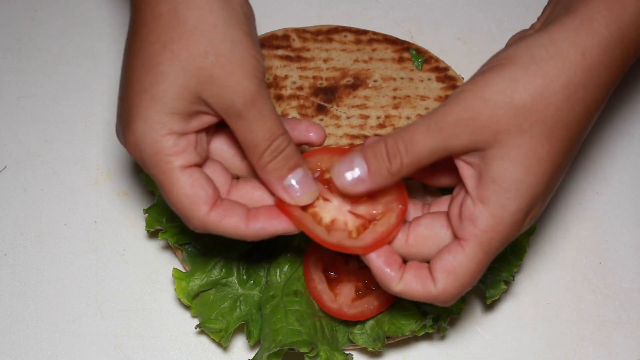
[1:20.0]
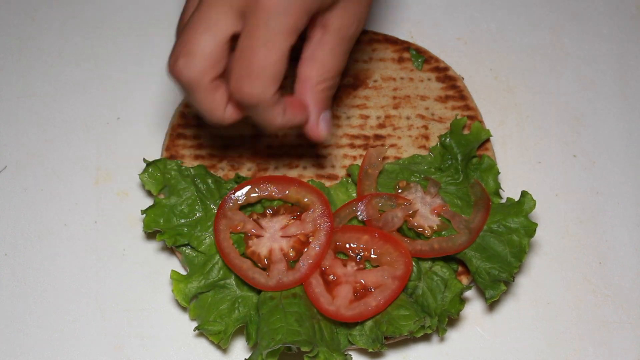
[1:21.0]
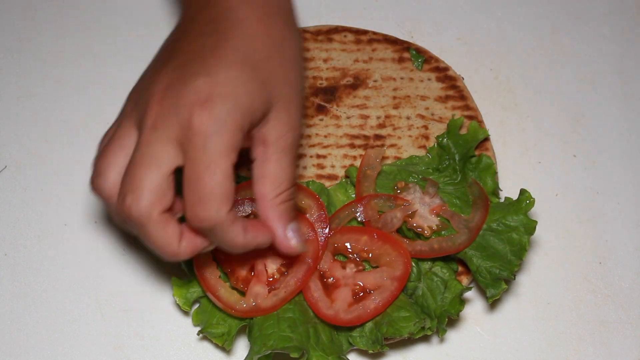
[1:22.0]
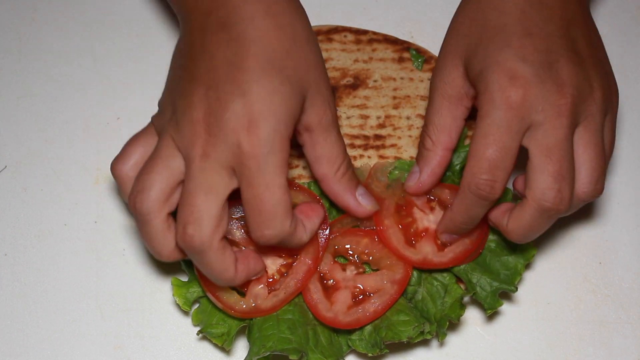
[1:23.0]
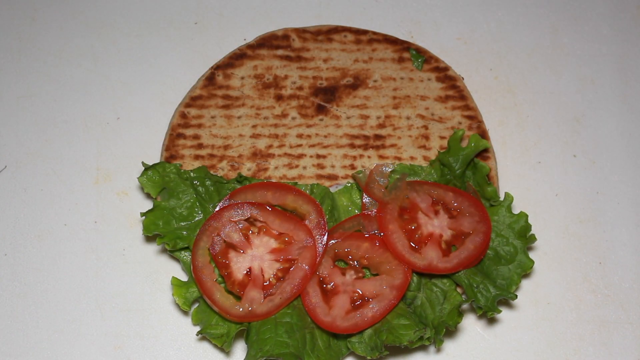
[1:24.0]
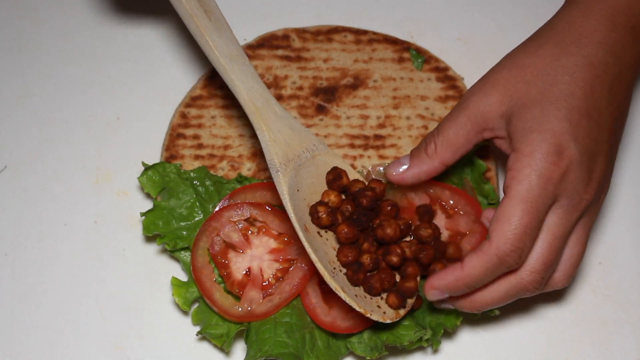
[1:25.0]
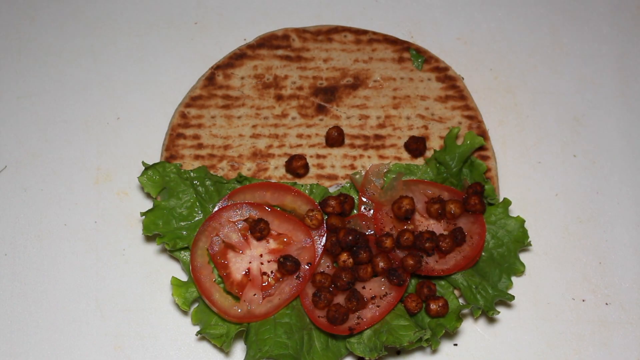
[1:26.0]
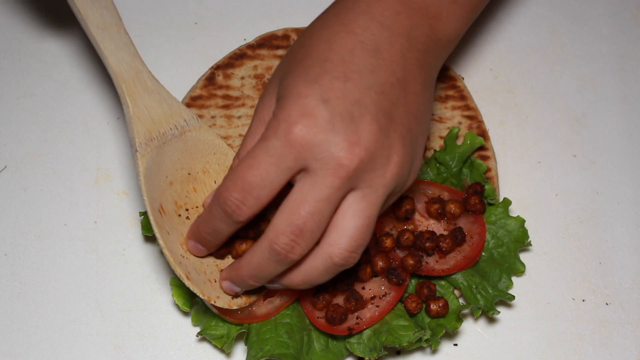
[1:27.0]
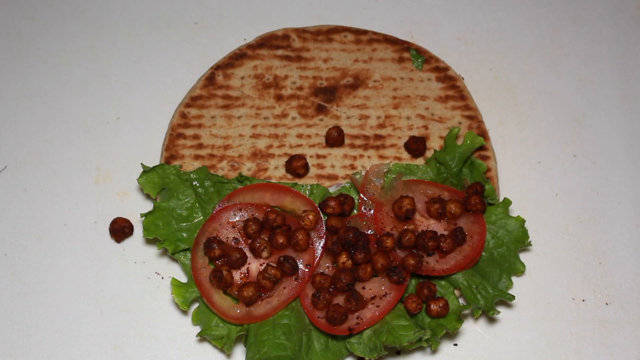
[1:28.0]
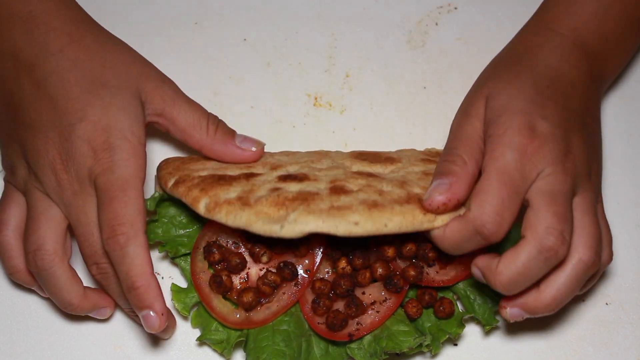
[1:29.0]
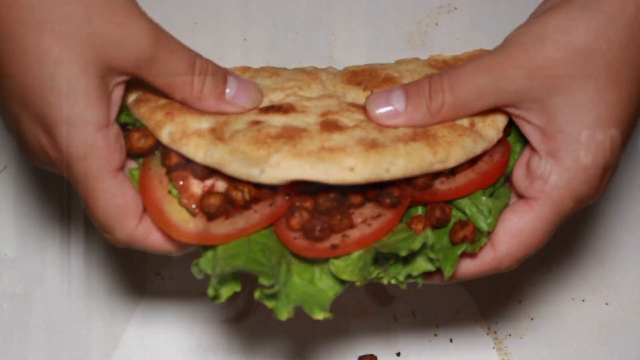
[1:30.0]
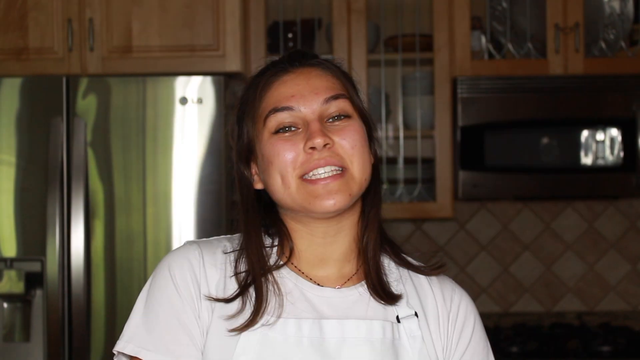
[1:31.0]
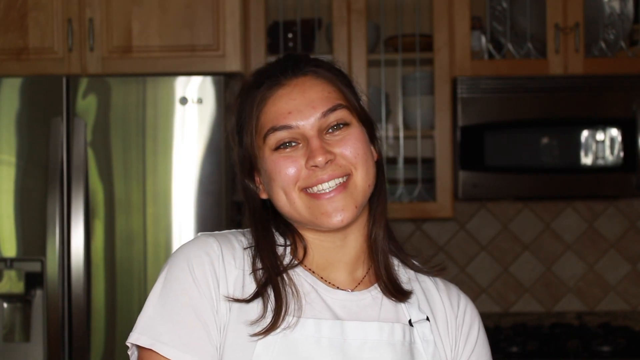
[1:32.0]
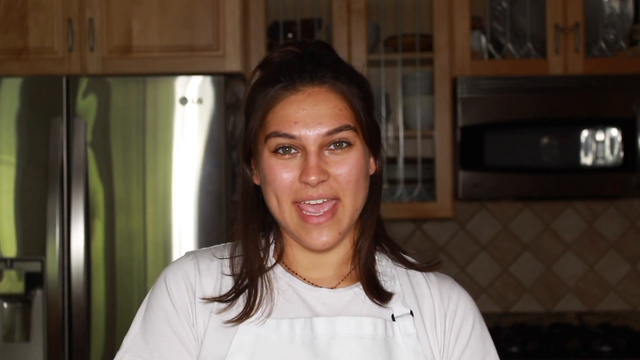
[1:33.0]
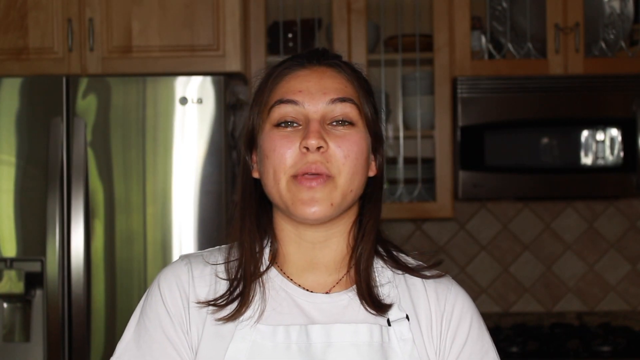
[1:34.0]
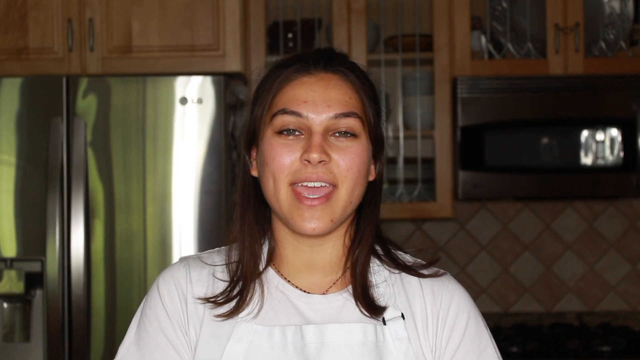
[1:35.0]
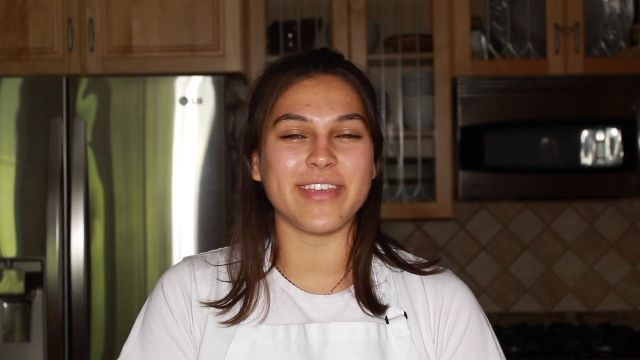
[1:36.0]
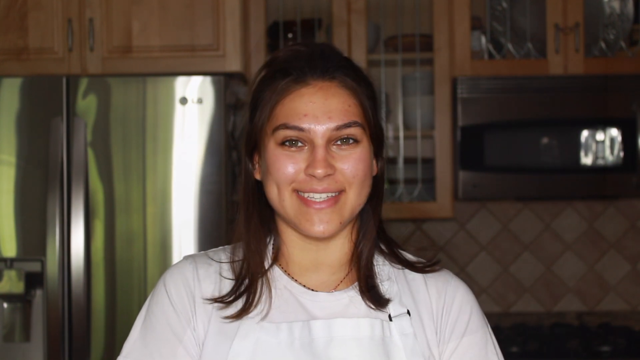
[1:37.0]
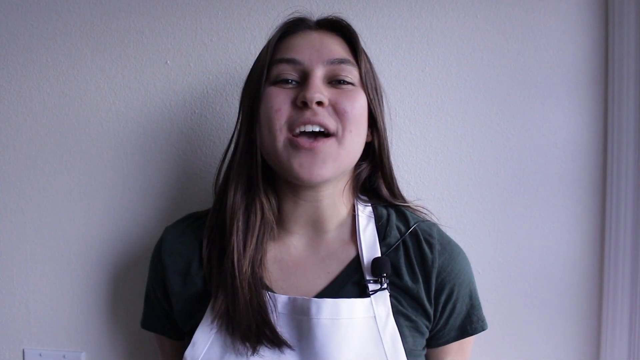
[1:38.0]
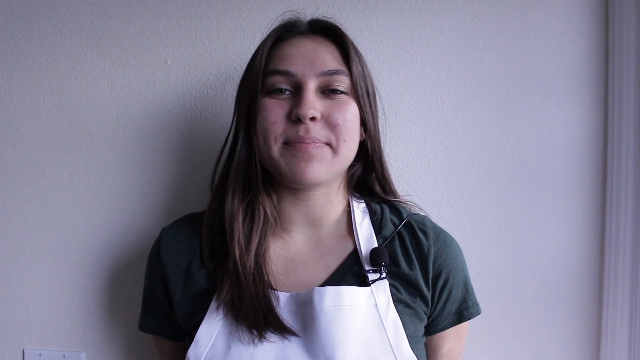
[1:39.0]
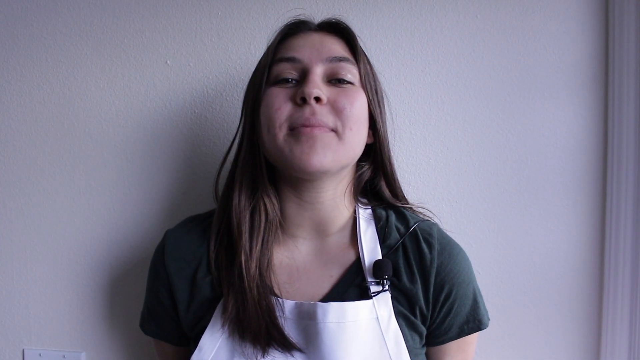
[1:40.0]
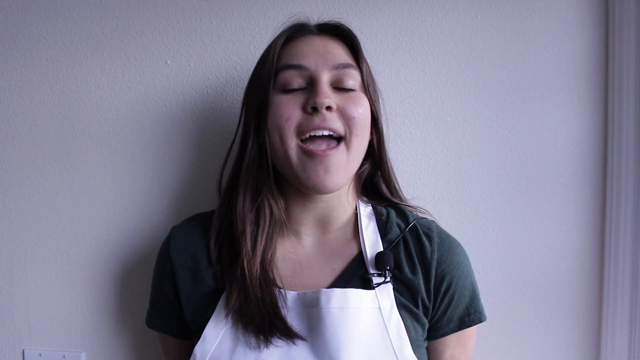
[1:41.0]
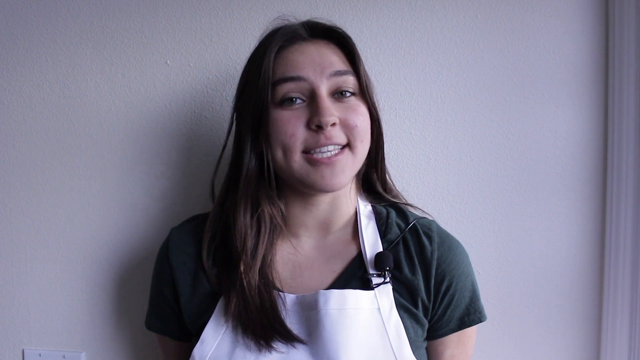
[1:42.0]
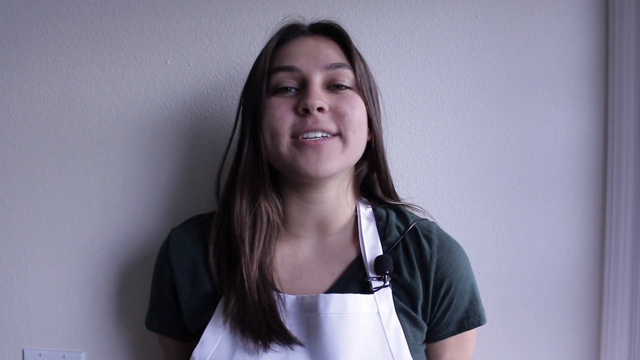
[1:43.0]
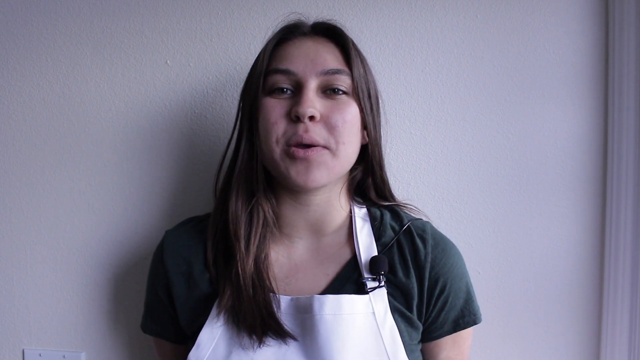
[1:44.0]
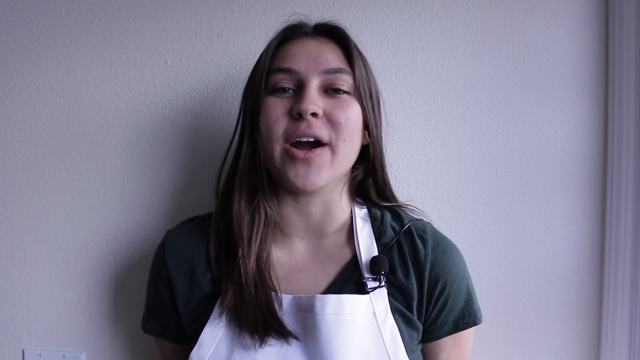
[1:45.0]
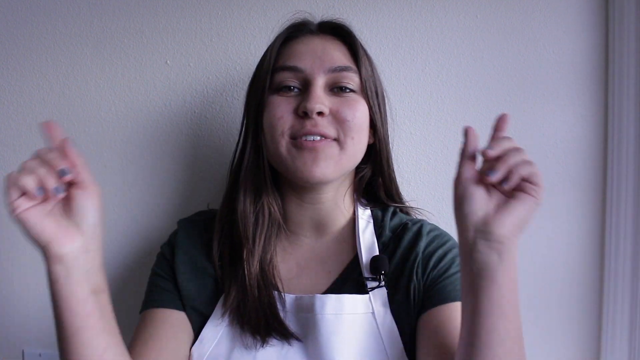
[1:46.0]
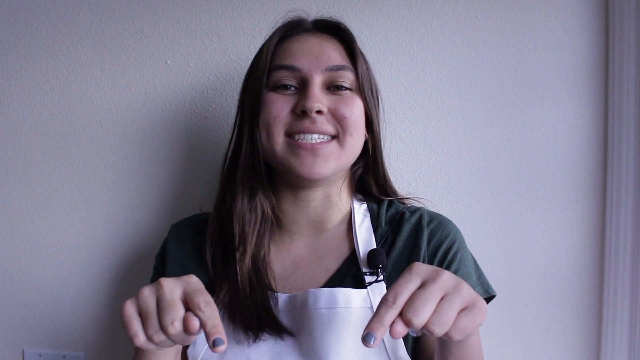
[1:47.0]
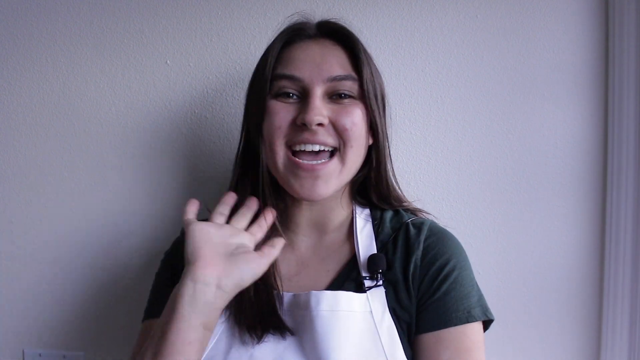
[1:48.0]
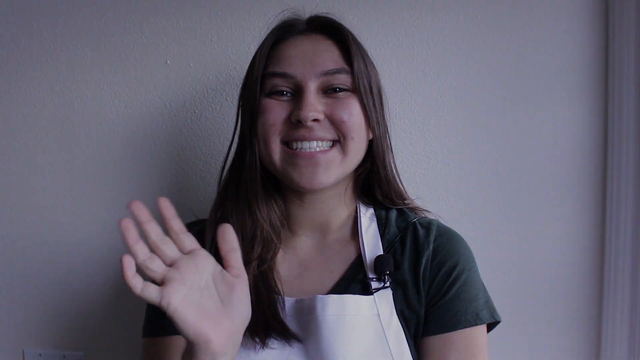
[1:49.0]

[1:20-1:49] A chickpea flatbread sandwich is being made. The chickpeas and tzatziki are ready. The cook gets out a circular flatbread and places it on top of a plain plate. She spreads the tzatziki on half of the bread, then puts four slices of red tomatoes and the baked chickpeas on that half. She closes the wrap, forming a crispy, golden wrap that is ready to eat. She then comes back to the camera to wrap things up.